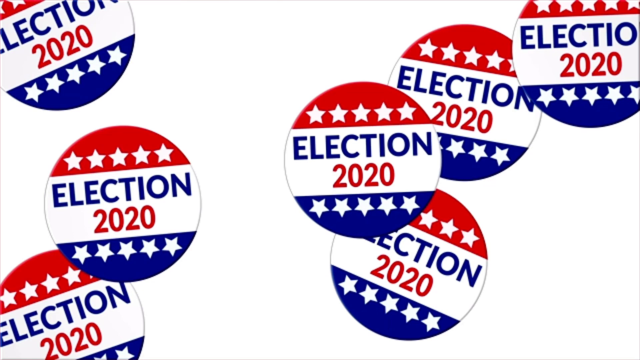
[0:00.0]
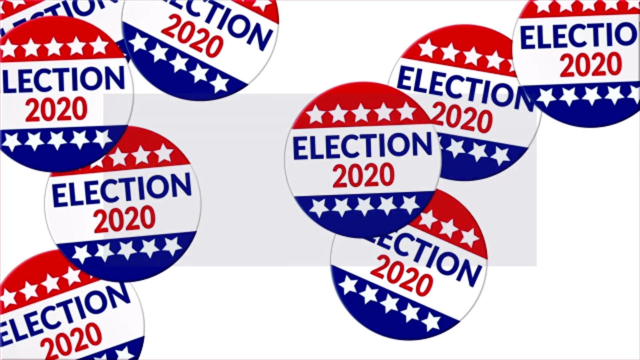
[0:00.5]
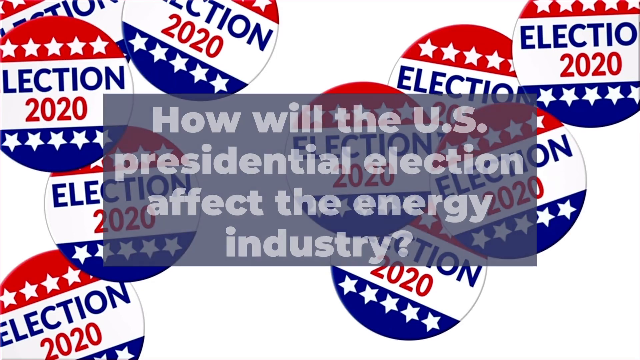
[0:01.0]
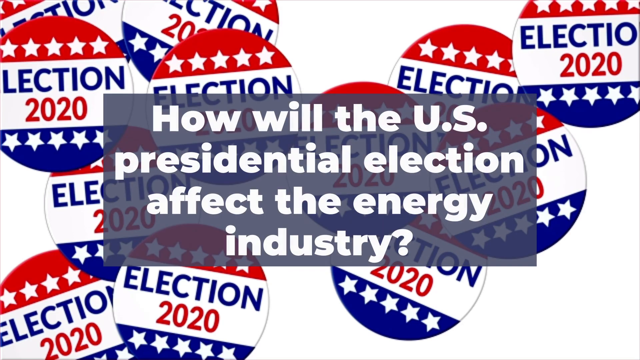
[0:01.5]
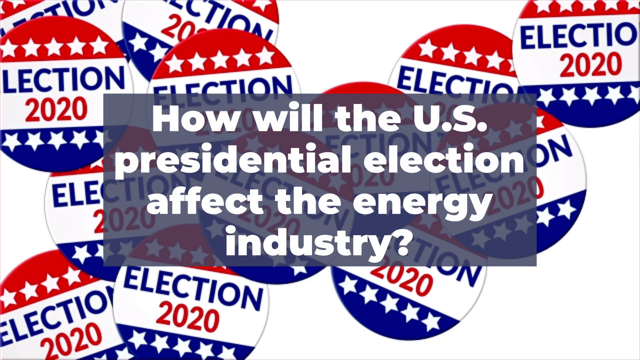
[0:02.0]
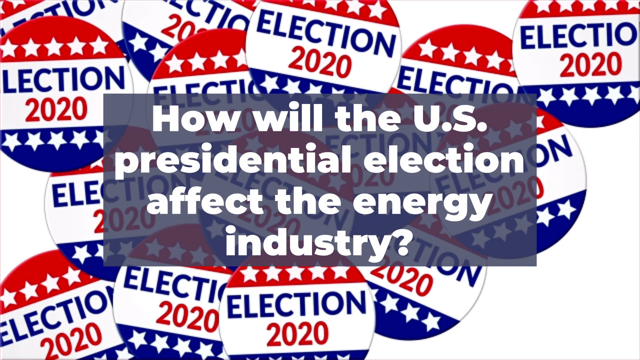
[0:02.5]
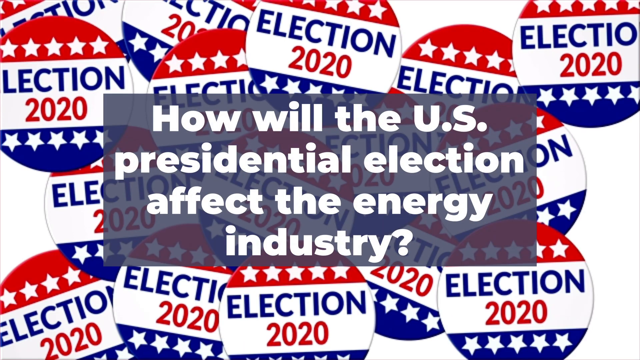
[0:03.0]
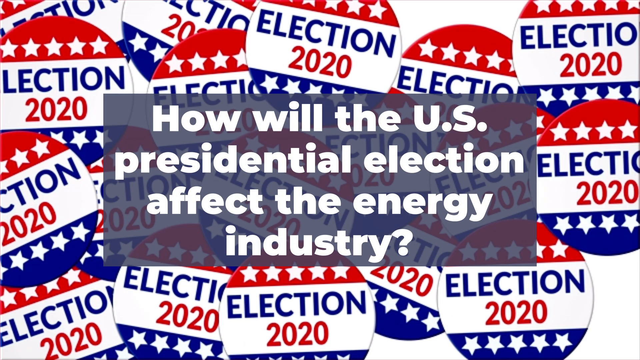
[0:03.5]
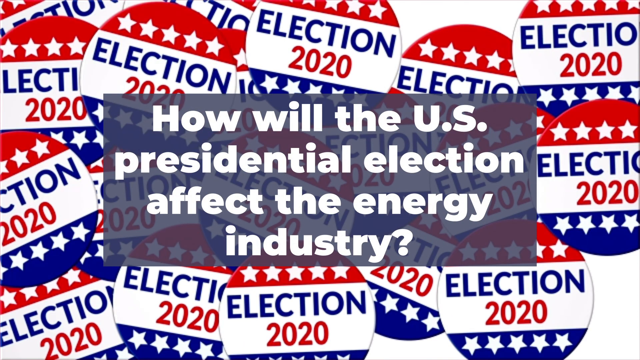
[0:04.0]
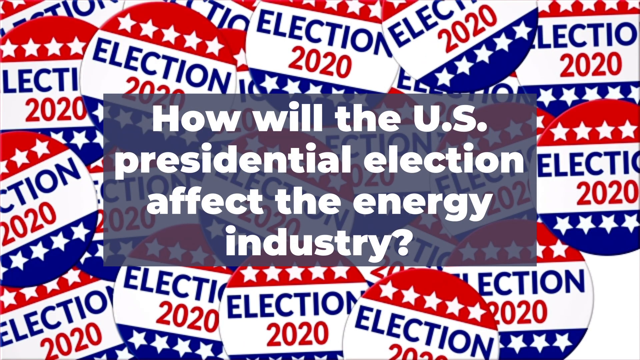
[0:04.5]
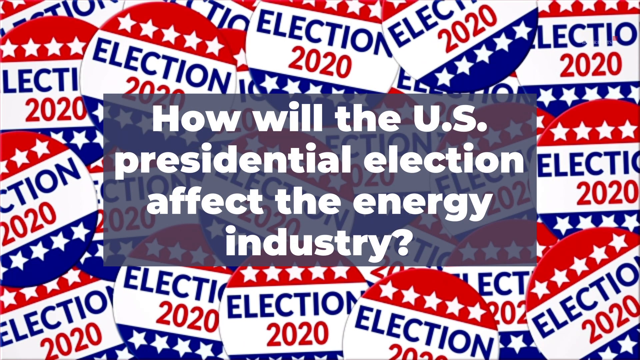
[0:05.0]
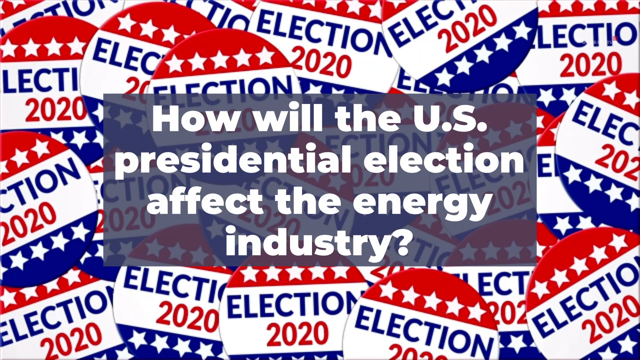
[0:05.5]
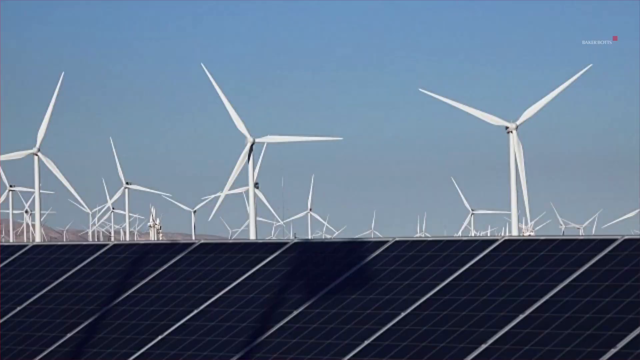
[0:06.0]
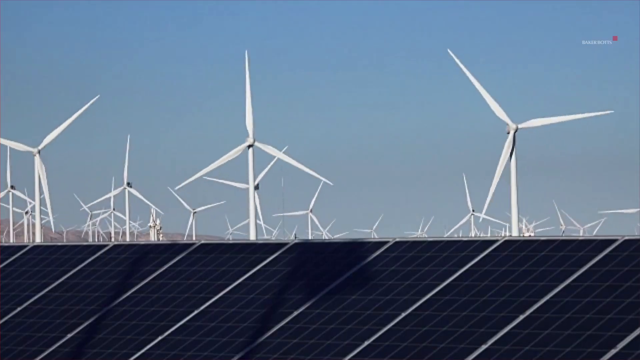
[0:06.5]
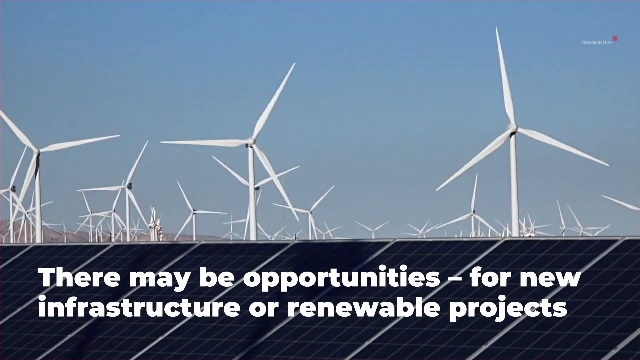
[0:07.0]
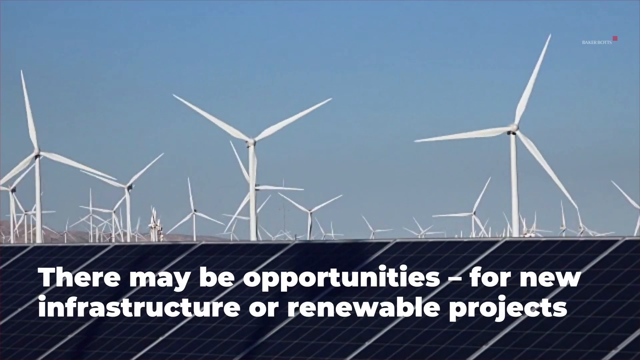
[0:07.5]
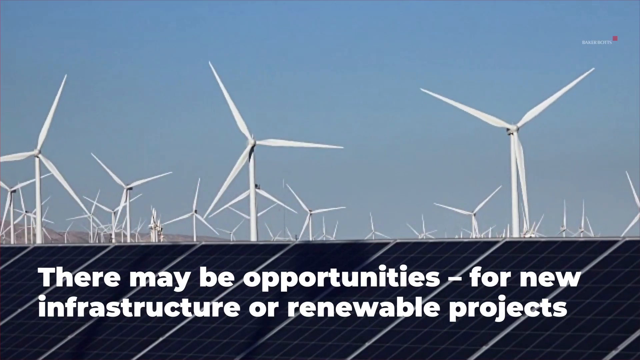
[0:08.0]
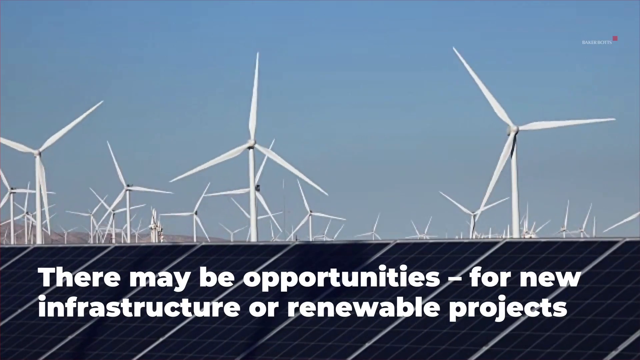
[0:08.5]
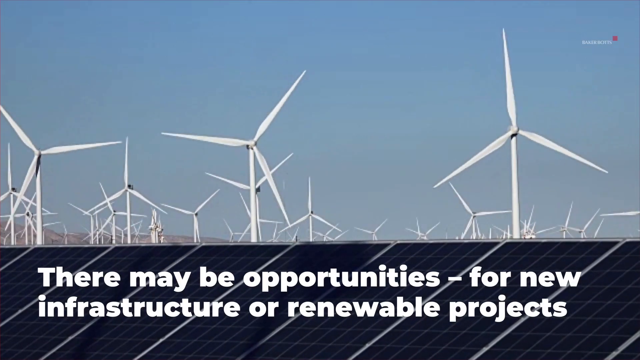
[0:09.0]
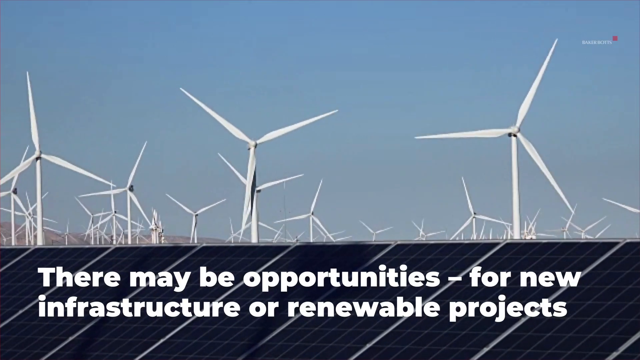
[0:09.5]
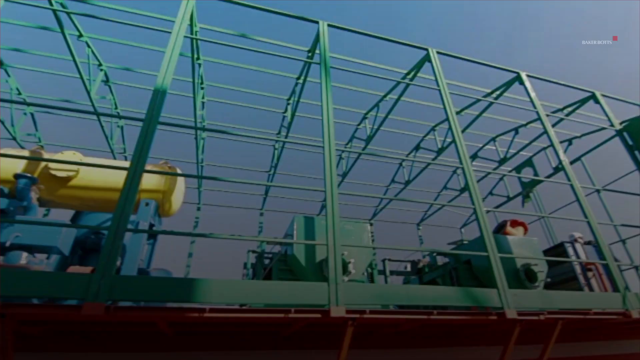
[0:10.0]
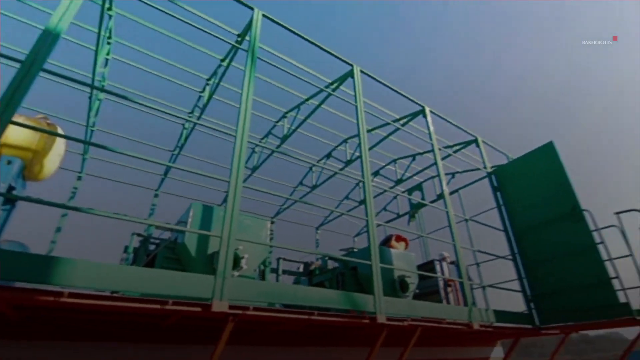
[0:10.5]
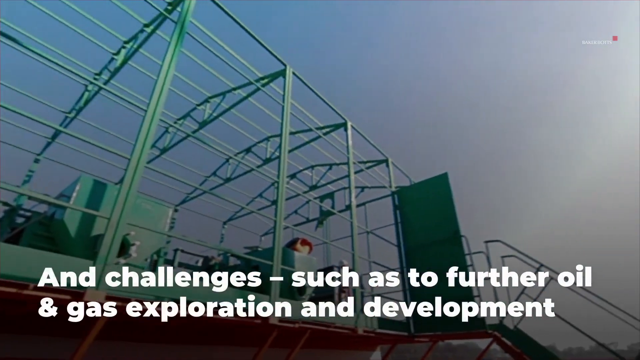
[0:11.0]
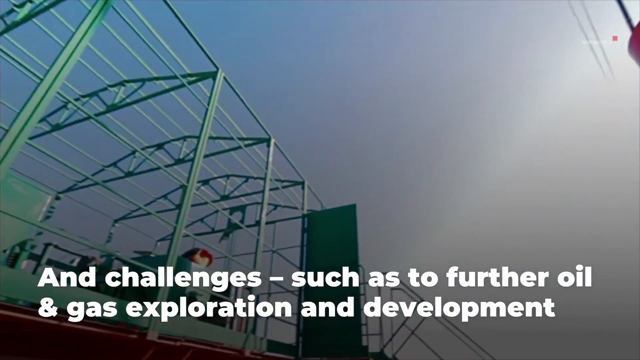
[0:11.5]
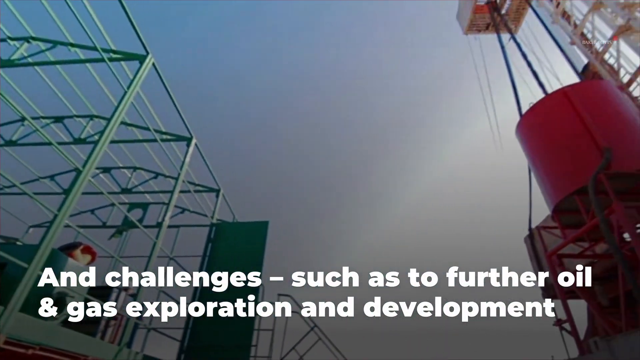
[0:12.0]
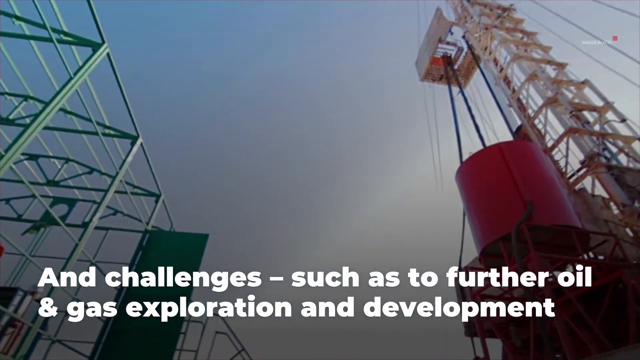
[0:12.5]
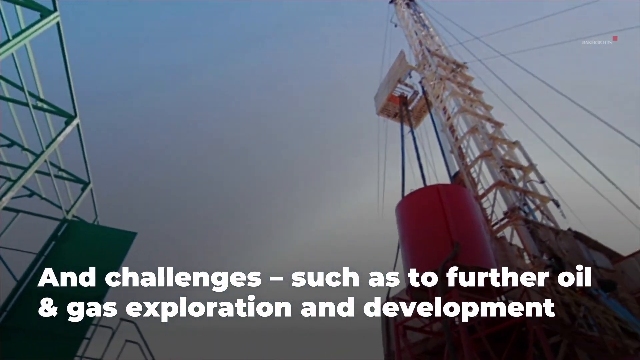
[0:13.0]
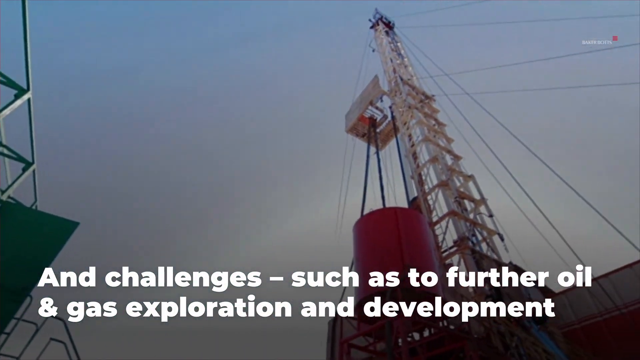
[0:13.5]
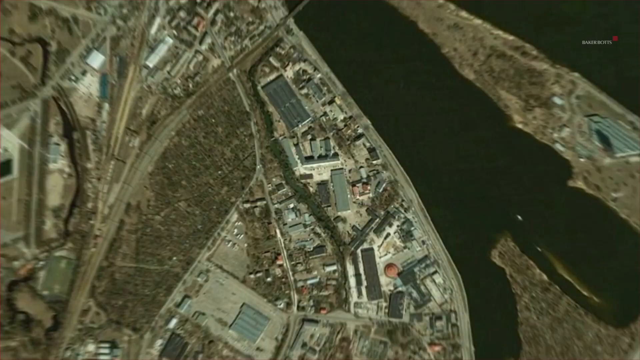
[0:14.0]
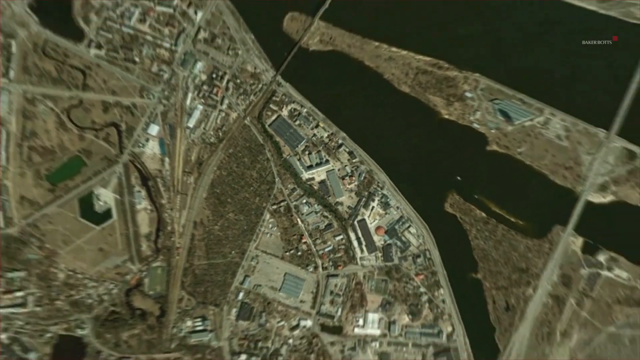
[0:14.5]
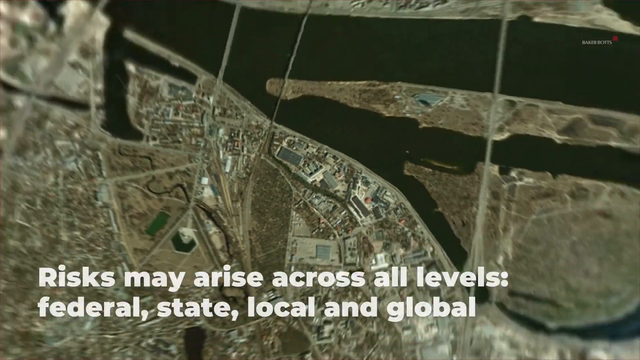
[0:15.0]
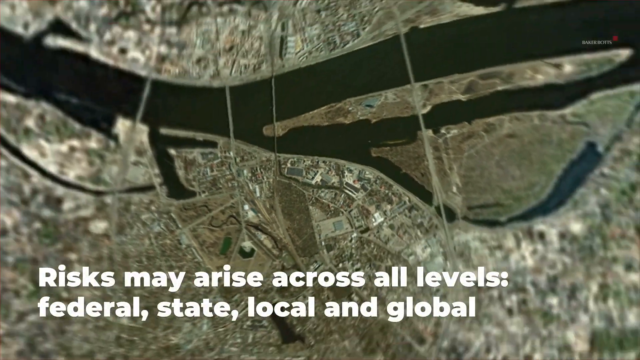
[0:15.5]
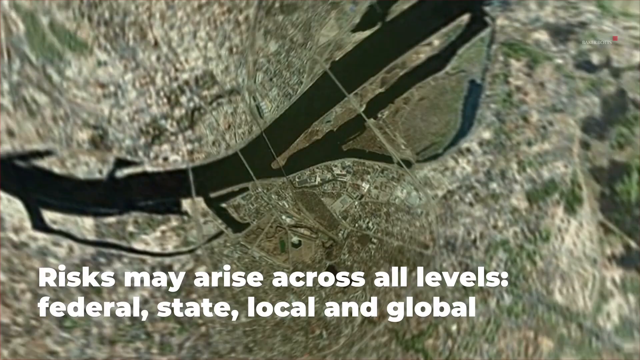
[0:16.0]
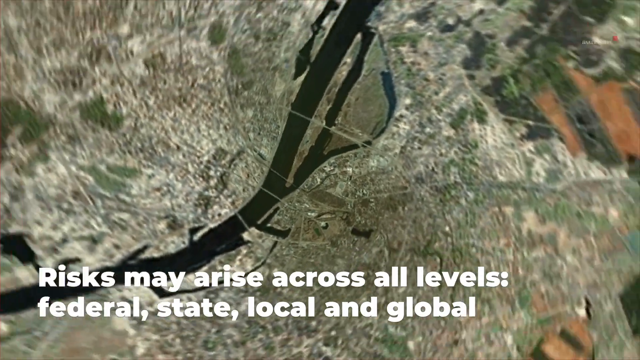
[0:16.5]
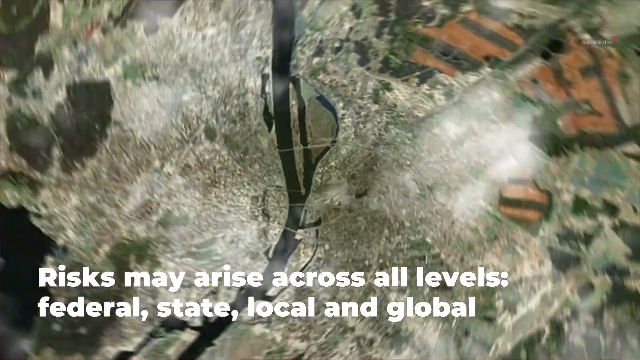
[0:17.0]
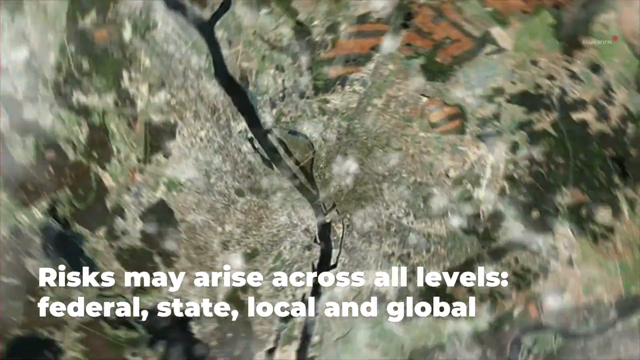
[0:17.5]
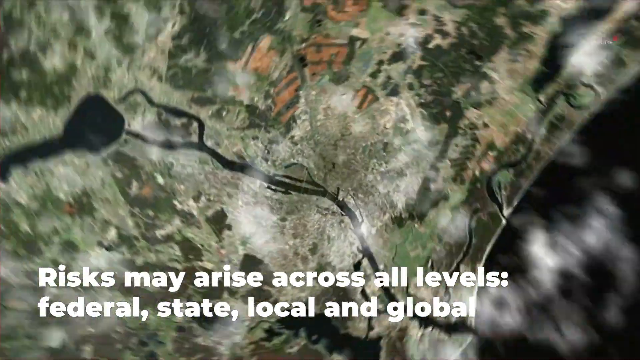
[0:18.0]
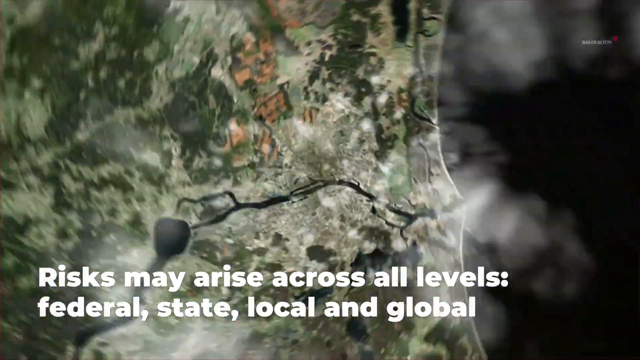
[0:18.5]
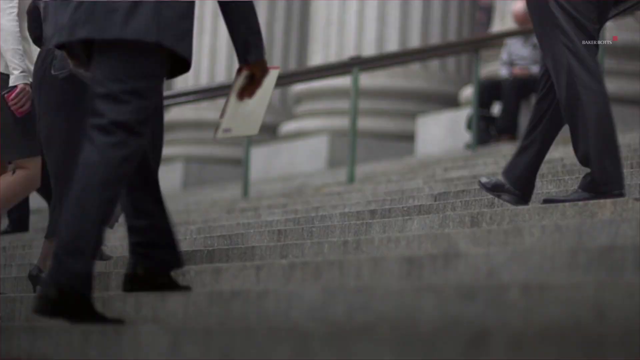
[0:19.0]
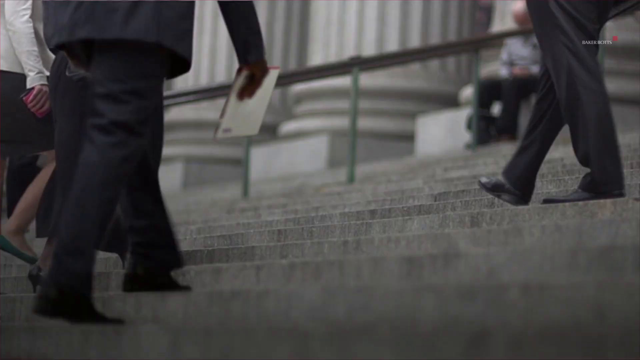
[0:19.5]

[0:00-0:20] The video concerns the 2020 election. Bunches of red, white and blue election emblems are on the screen: the top third of each is a red background with white stars, the middle third is a white background with the word "election" in blue and "2020" in red, and the bottom third is a blue-black background with white stars. There are about 15 of these little emblems, and they are in motion. A text box says "how will the U.S. presidential election affect the energy industry?" A photo of a wind farm follows, with possibly 40 or so windmills in motion, all moving at the same time under a very clear sky. The first text box says "there may be opportunities for new infrastructure or renewable projects." The scene changes to what appears to be an oil refinery operation on land rather than at sea, where a very tall, white drill is apparent, and the text says "and challenges such as to further oil and gas exploration and development." The camera moves to a close-up of the surface of the Earth, apparently a normal land area, then pulls up to space, and the land becomes much more indecipherable, looking more as it would from space. The text says "risk may rise across all levels, federal, state, local, and global." Next, what appear to be men and women in suits walk up the granite steps of a large building, and the text says "involve regulations, taxes, litigation, environmental, or shareholder issues."